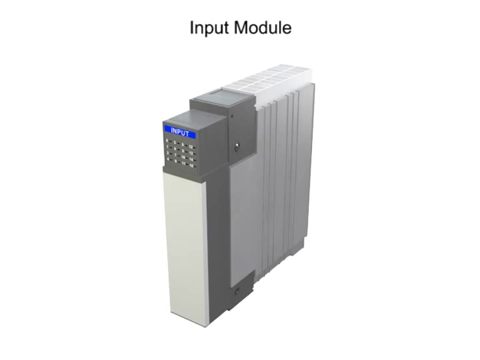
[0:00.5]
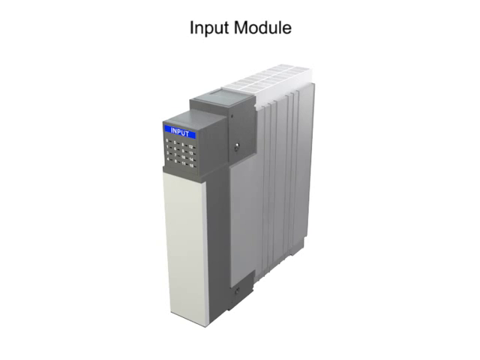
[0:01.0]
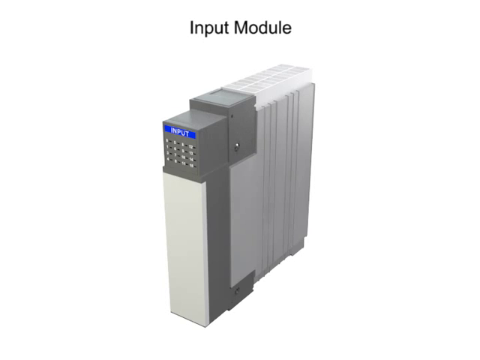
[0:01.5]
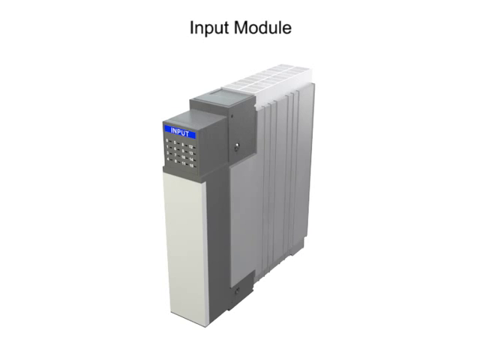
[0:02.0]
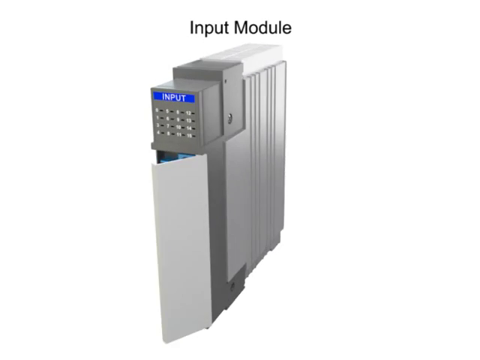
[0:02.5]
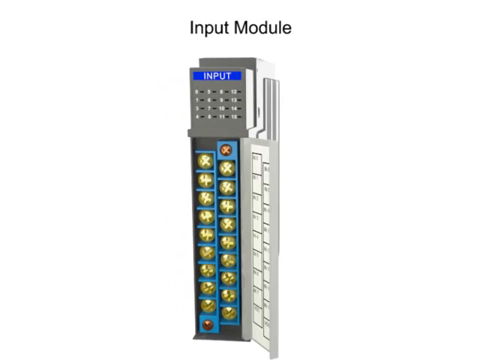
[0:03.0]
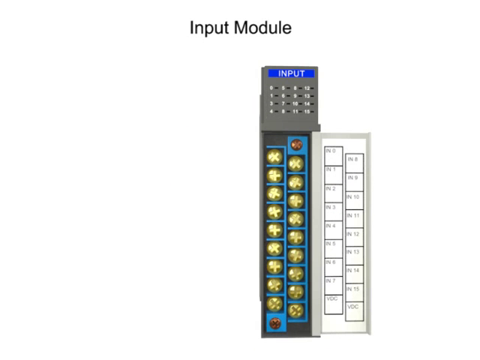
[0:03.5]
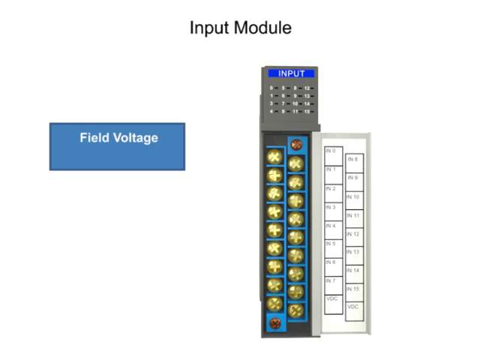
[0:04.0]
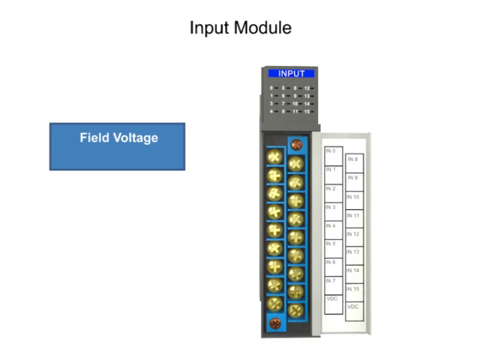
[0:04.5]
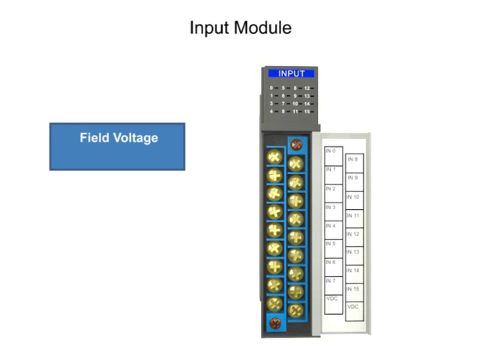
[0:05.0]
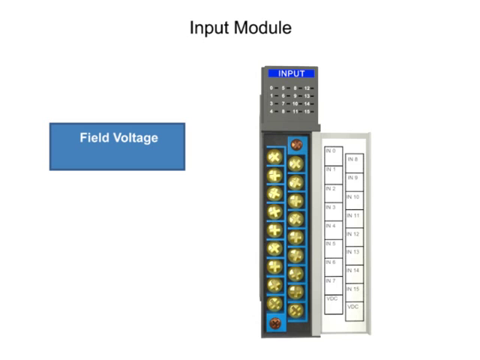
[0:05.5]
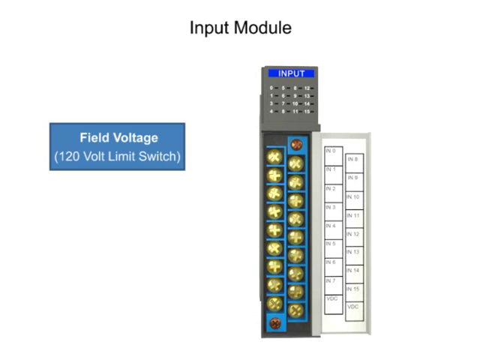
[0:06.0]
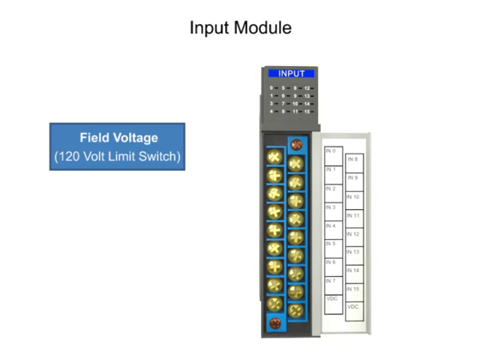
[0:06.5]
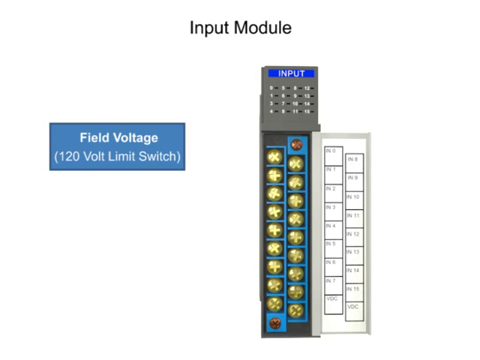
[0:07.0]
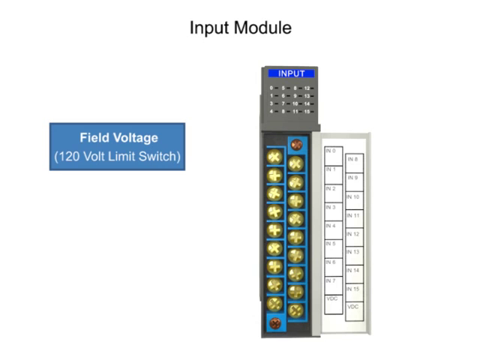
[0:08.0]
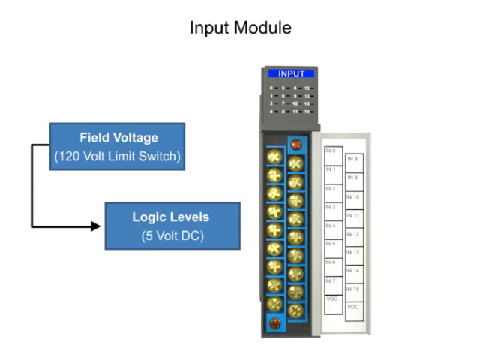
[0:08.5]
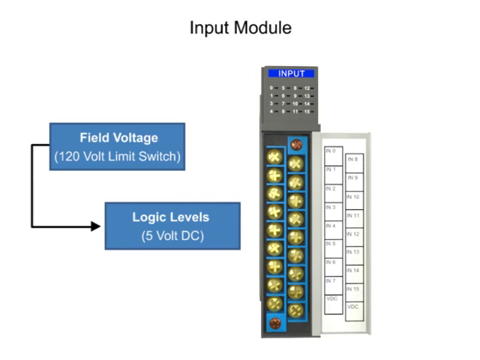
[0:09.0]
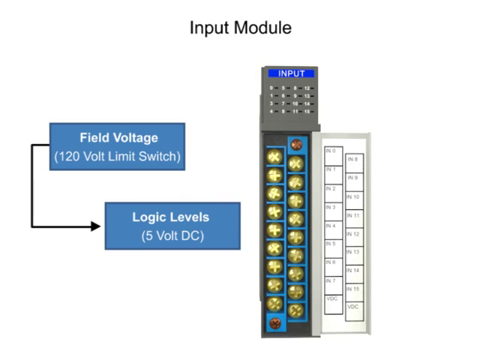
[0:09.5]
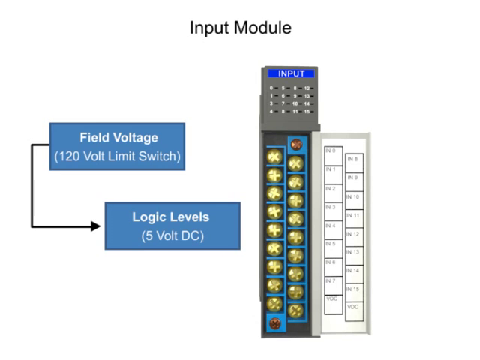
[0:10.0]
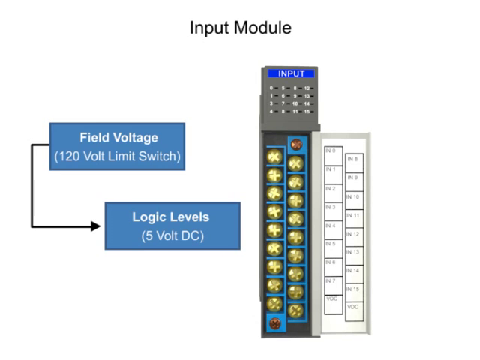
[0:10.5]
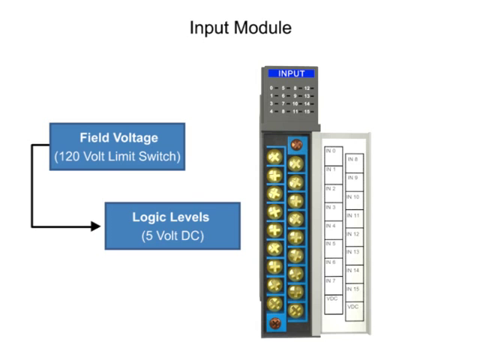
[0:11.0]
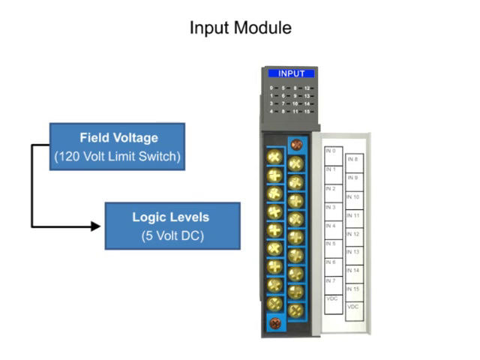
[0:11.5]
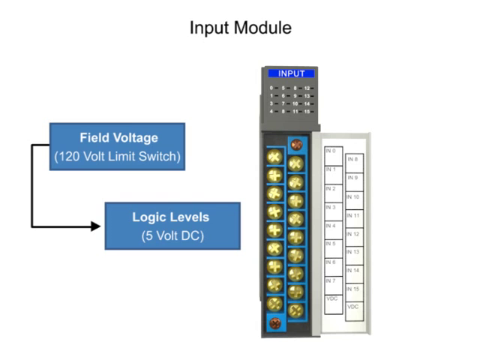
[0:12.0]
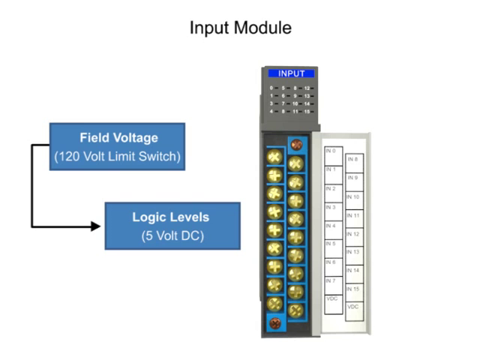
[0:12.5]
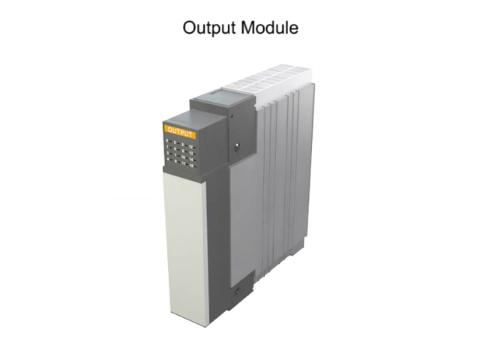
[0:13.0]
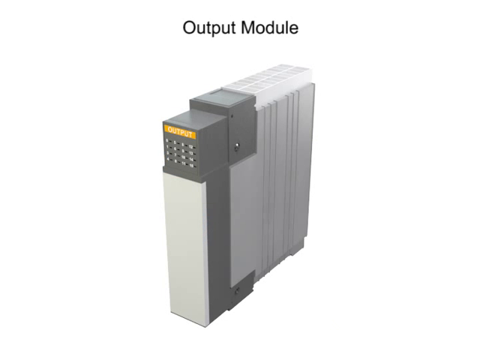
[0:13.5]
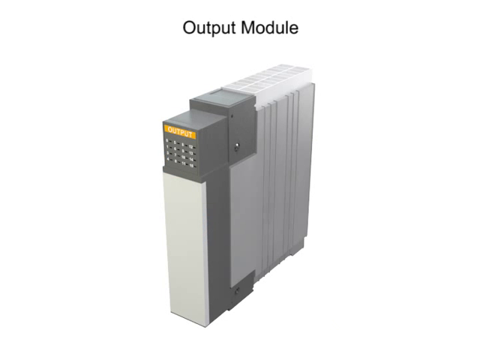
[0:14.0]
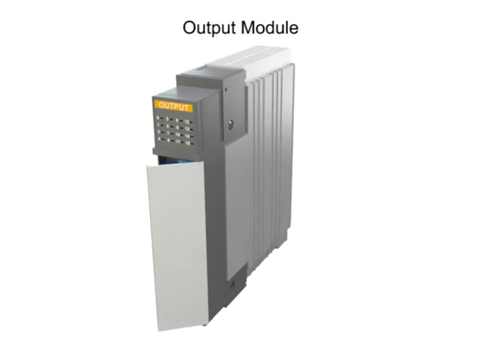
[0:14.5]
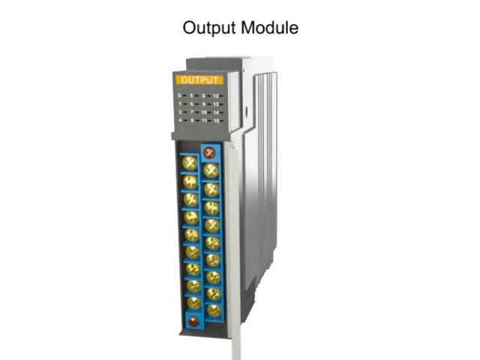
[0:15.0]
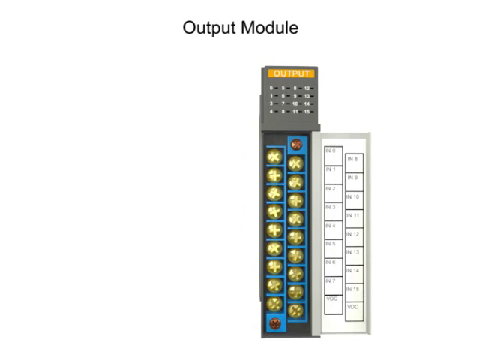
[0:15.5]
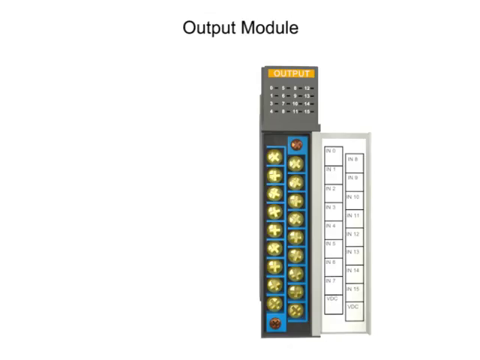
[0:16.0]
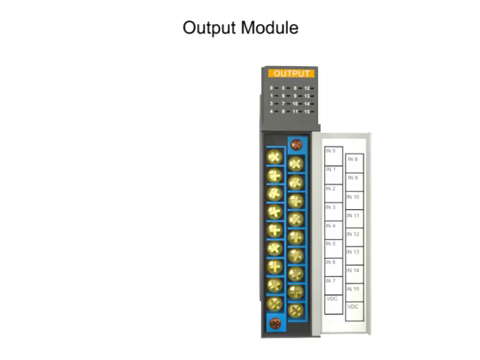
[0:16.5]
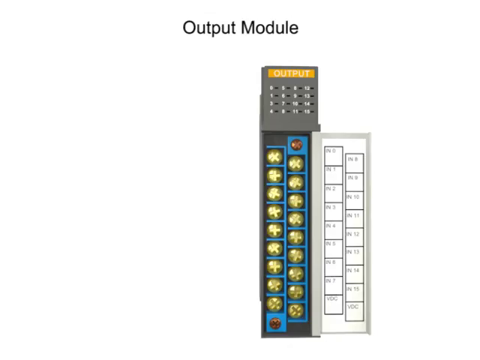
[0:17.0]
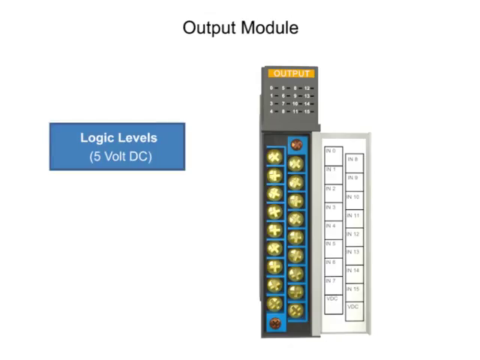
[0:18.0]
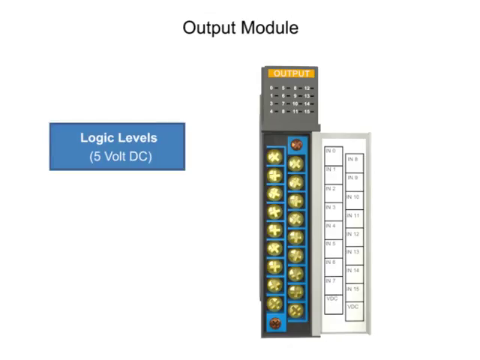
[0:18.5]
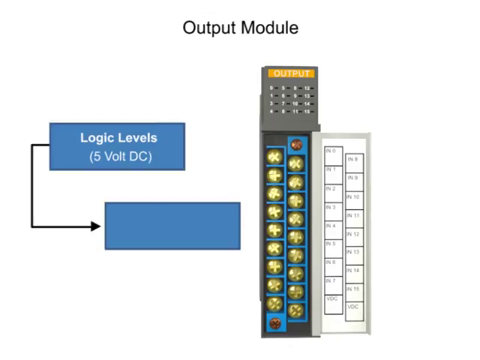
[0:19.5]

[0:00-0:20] An introduction to the input module is shown. There is a picture of a grey input module with yellow sockets inside it. Beneath the picture is a short breakdown of the input module, showing it opened up. Inside there is field voltage, shown with a power limit of 120 volts and a limit switch. Another subsystem, called logic levels, shows 5 volt DC (direct current). The subsystems inside the module are yellow. The input module also has a numbered display, apparently numbered from 0 to 14.